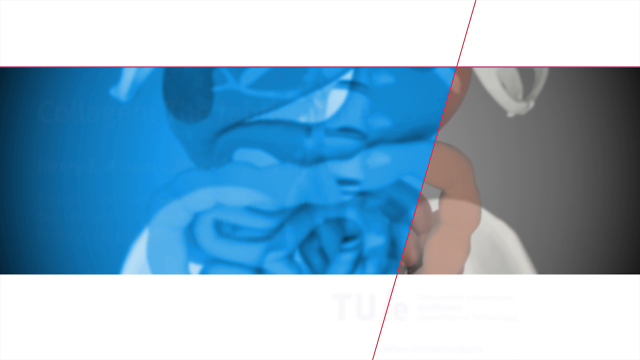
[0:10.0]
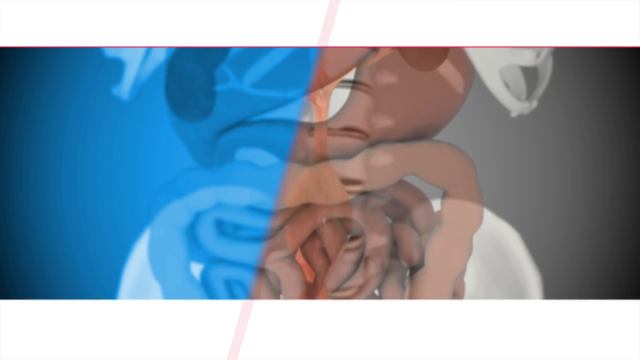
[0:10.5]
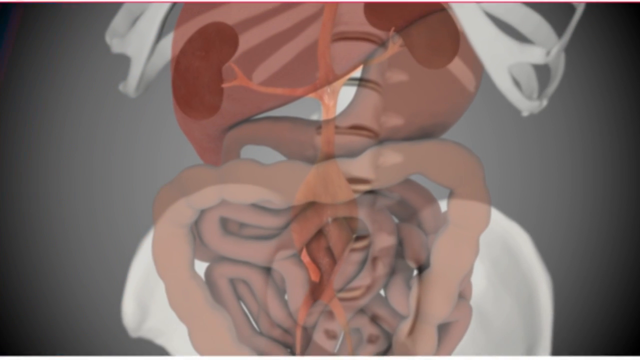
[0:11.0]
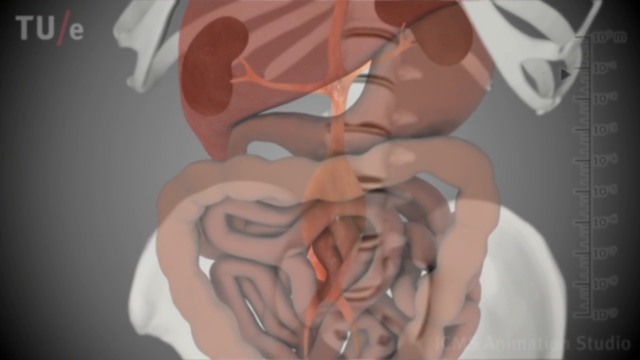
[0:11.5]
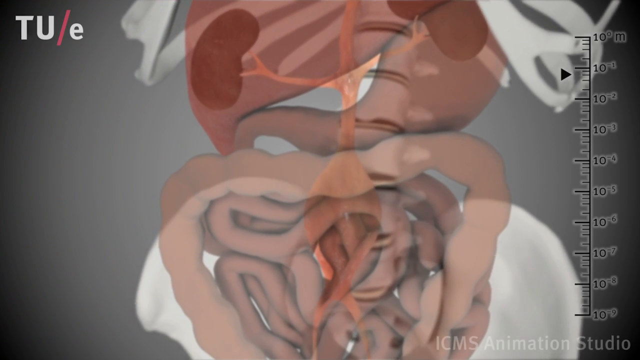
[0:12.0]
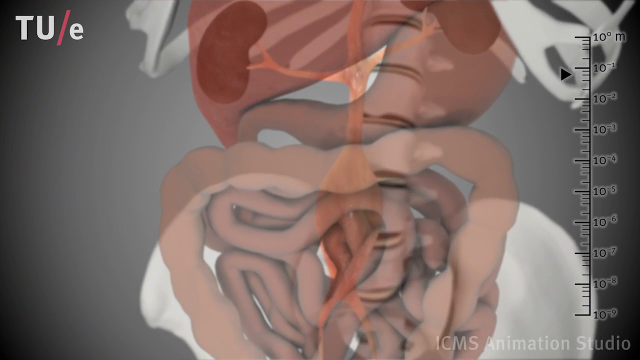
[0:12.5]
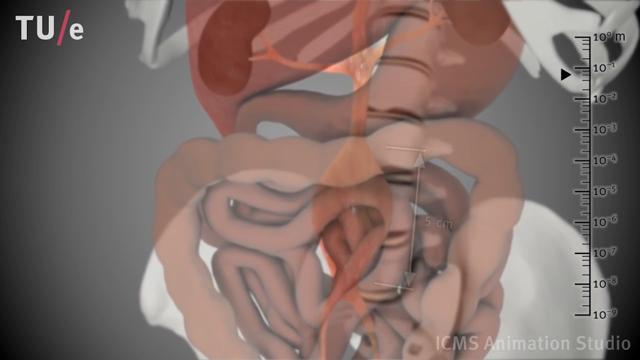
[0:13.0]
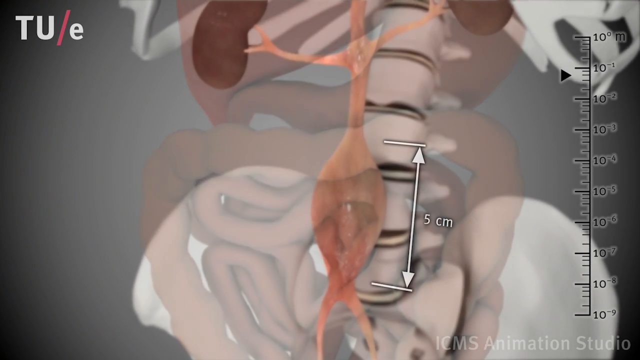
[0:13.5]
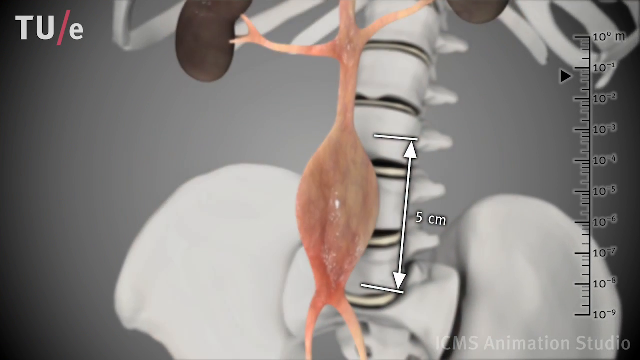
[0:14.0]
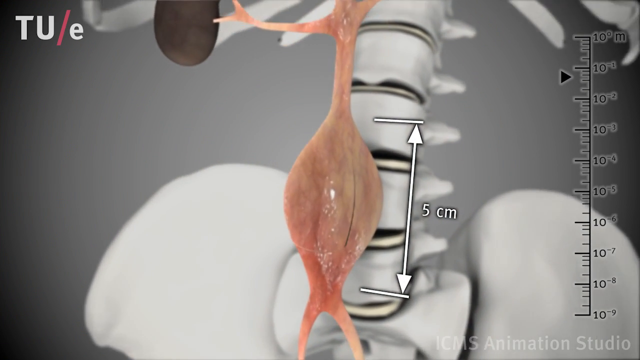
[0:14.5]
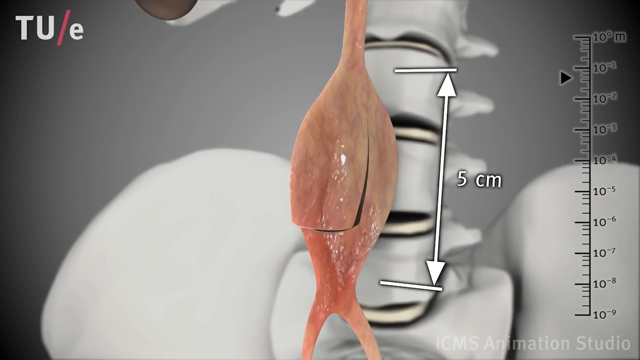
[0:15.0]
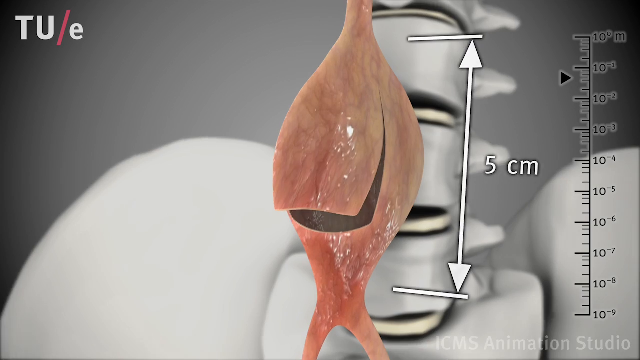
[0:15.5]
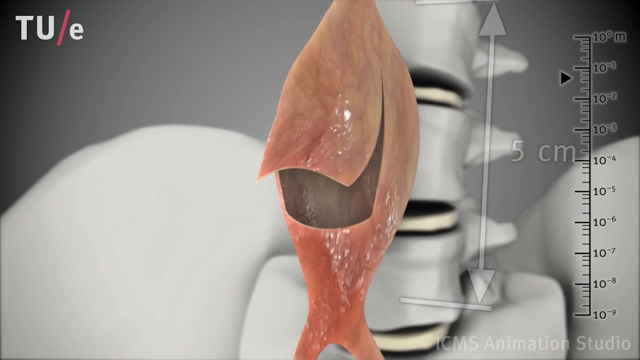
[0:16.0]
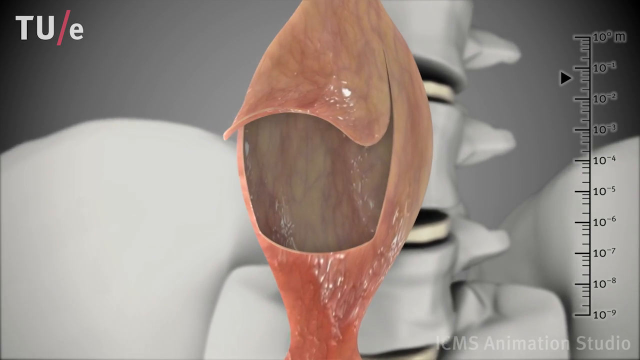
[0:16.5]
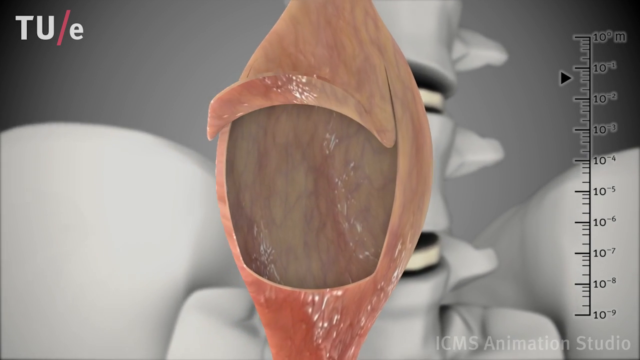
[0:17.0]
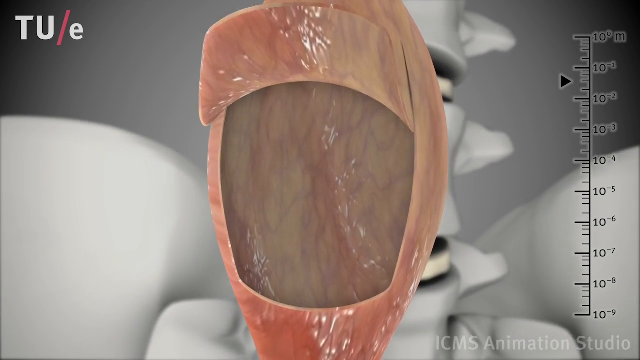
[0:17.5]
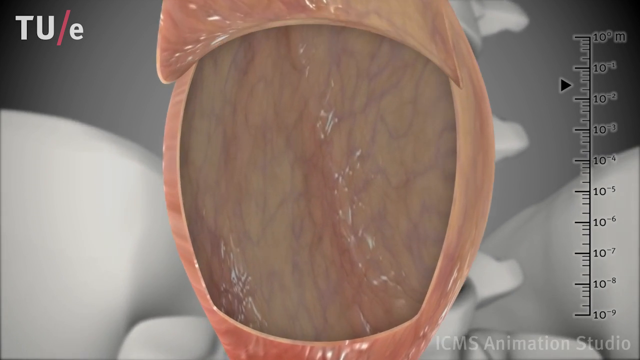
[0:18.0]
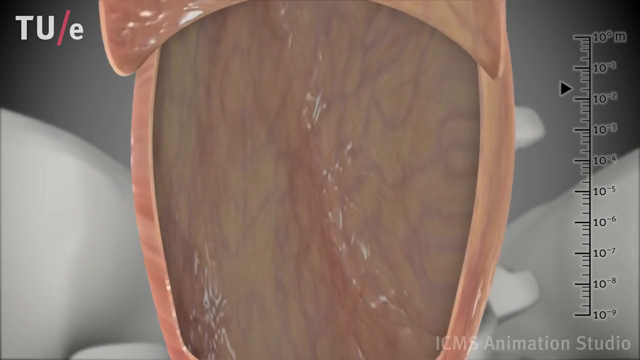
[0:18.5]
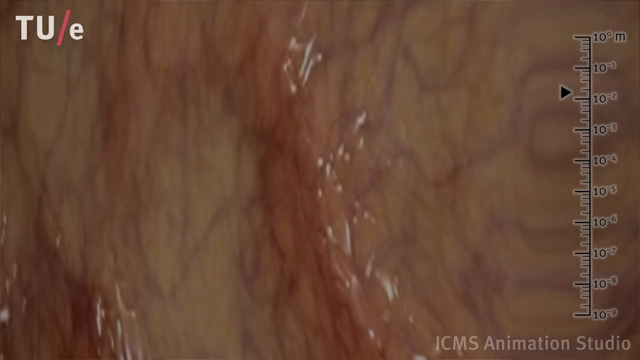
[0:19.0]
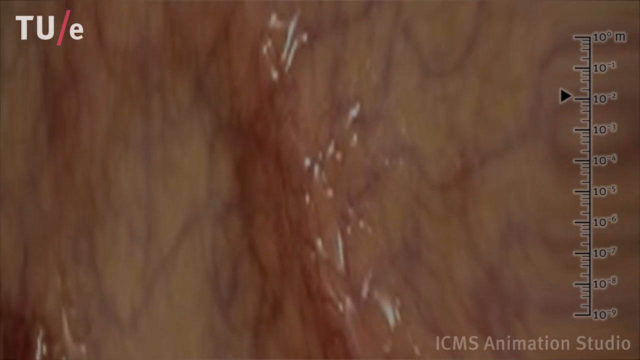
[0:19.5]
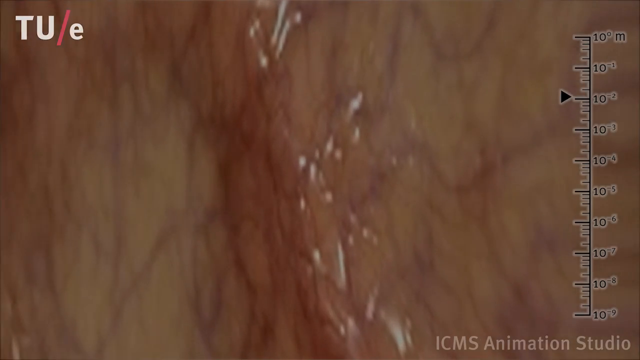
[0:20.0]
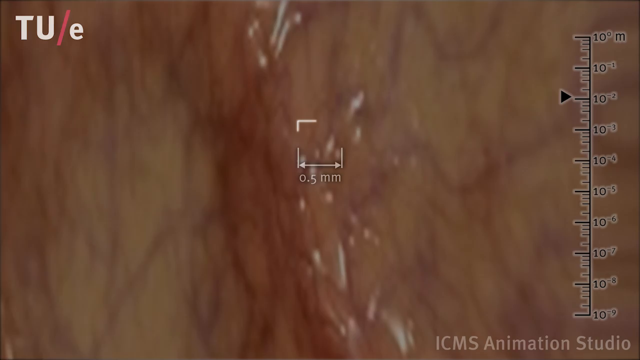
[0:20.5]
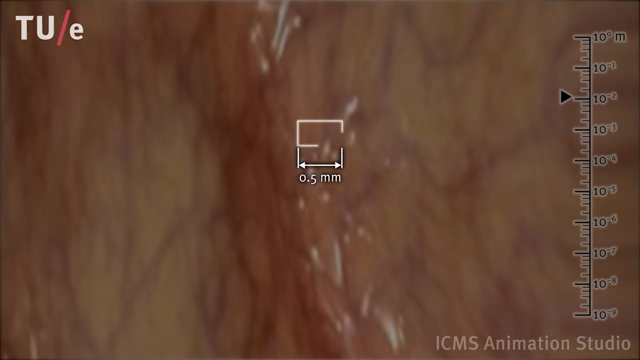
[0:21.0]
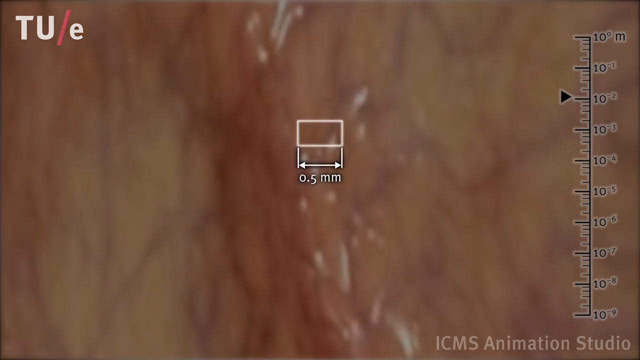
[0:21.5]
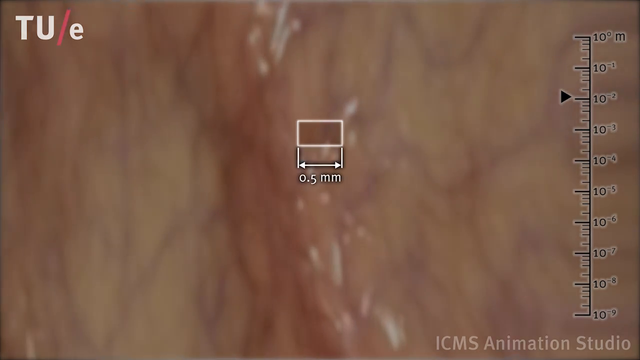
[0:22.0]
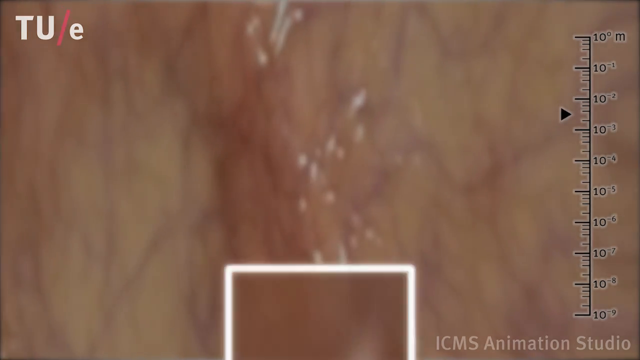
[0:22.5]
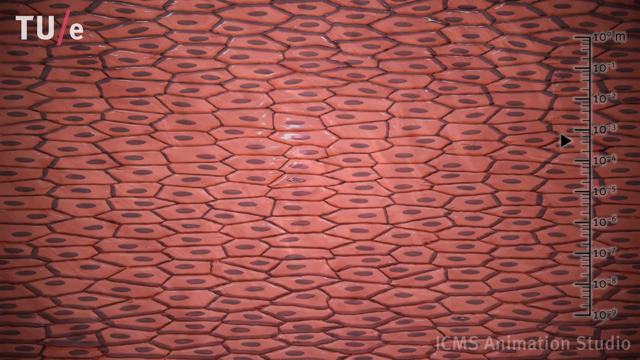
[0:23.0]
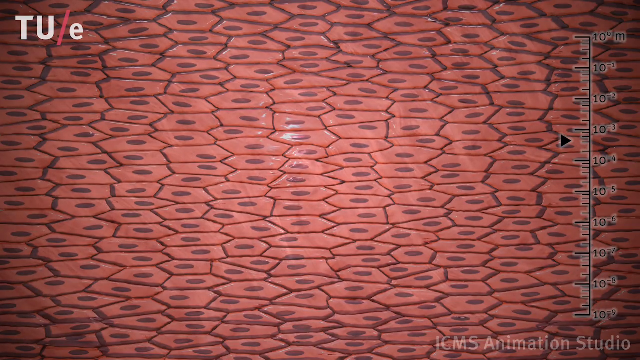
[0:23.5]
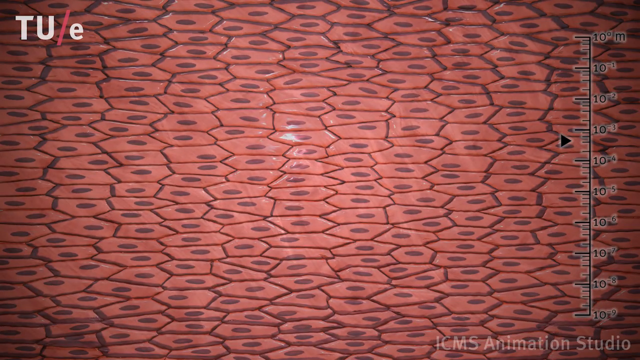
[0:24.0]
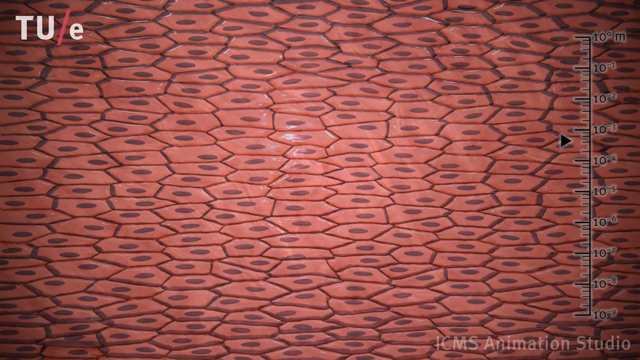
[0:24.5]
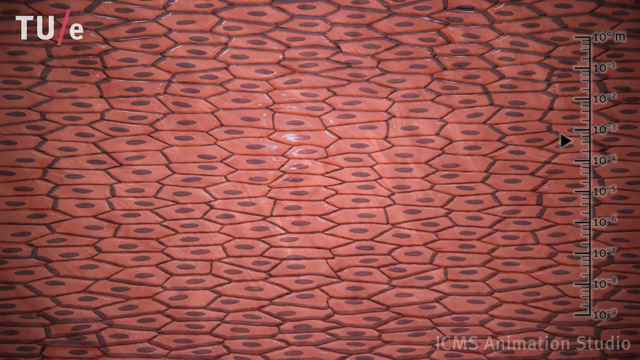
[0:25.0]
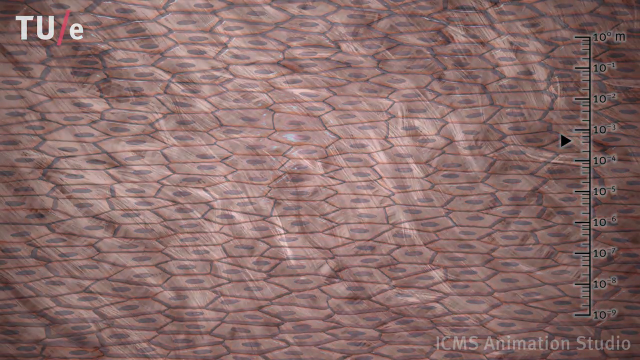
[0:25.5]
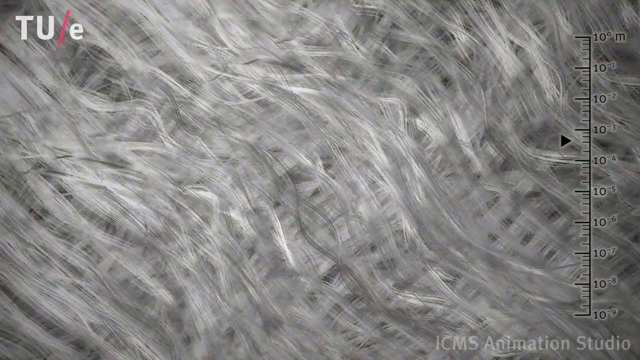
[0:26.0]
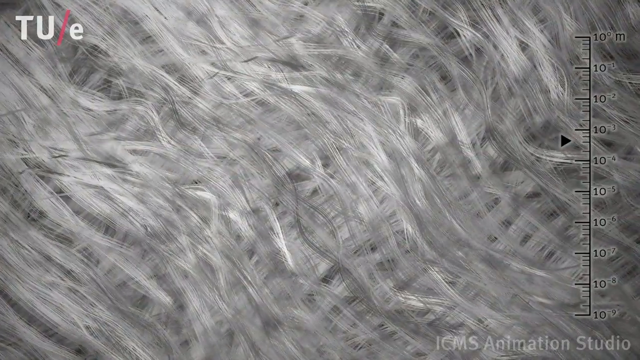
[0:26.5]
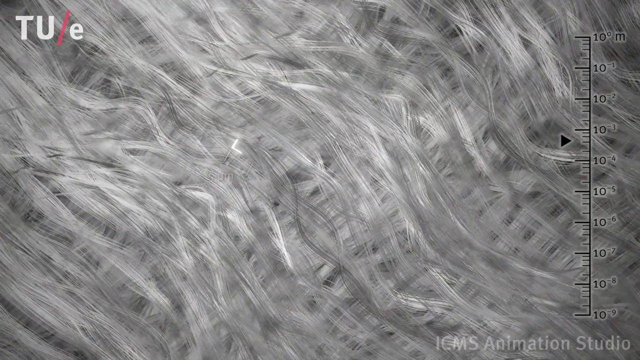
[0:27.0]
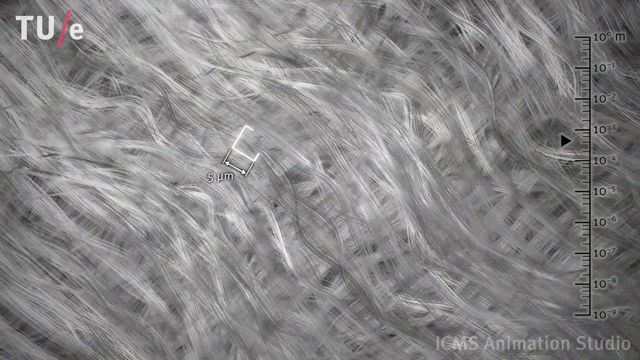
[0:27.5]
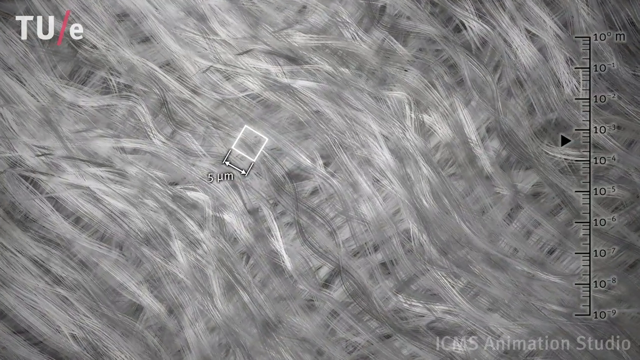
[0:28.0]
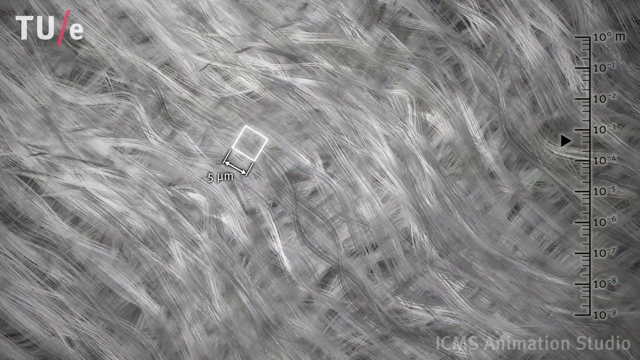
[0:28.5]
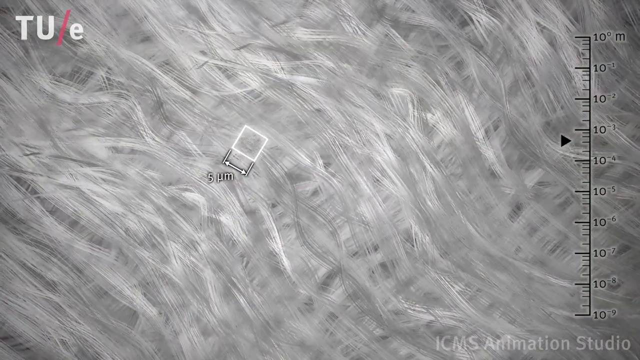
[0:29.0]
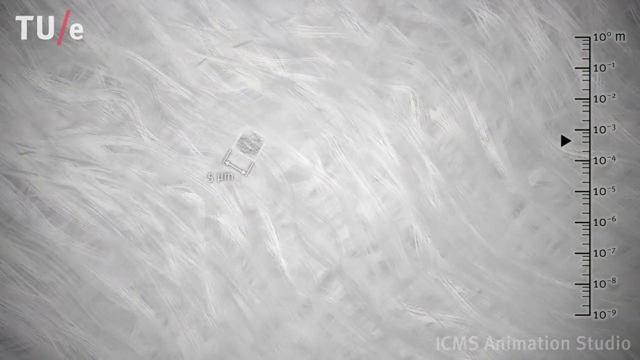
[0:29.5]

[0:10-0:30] In the background is what looks like small intestines, a stomach and a liver, pink in color, with the left side of the frame blue and the right side gray, separated by a red diagonal line. There is a white banner at the top and the bottom. The diagonal line moves all the way to the left and the white borders move upward and downward, revealing the full view of what looks like the intestines, liver and stomach. At the top left is "TUE", and at the bottom right there appears to be a scale from 10 to the minus 9 up to 10 to the 0 meter. The view moves to what looks like the bladder or the kidneys at the top right, connected to a tube that goes down to a flesh-colored oval thing. A white arrow with two horizontal lines reading "five centimeters" measures this oval organ. The skin then appears to be flapped upwards, and the camera zooms in and goes inside the oval organ, going deeper until the side wall inside it is seen. A small white rectangle is drawn with an arrow measuring it that reads "0.5 millimeters". The view zooms in more to a diagram or animation of what looks like many cells, dark orange-red and light pink, which transitions to diagonal strands running from the top left to the bottom right. Another small white rectangle appears with a measurement reading "five micrometers", and the video fades out to white.